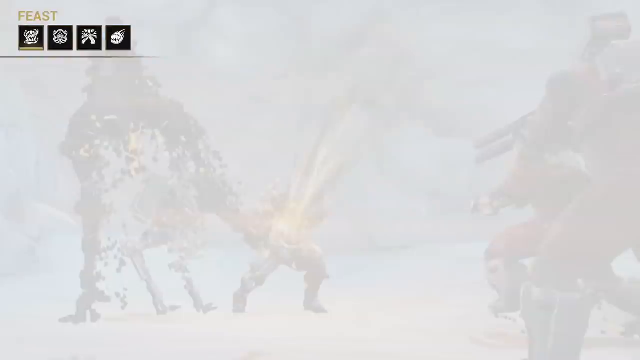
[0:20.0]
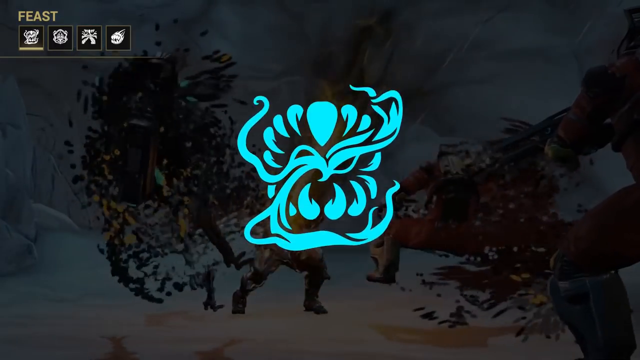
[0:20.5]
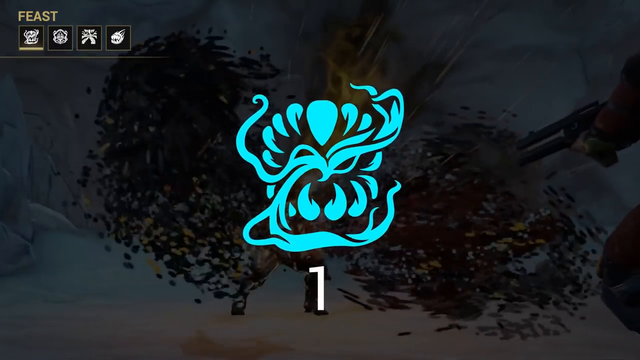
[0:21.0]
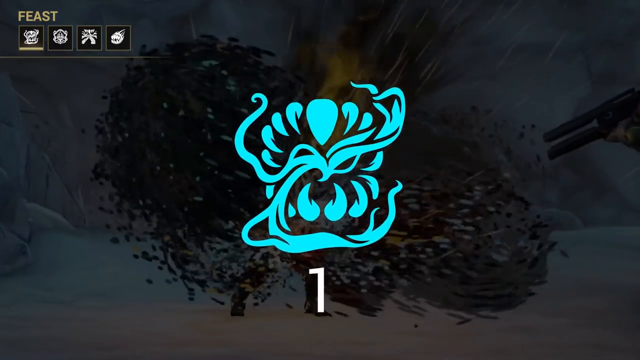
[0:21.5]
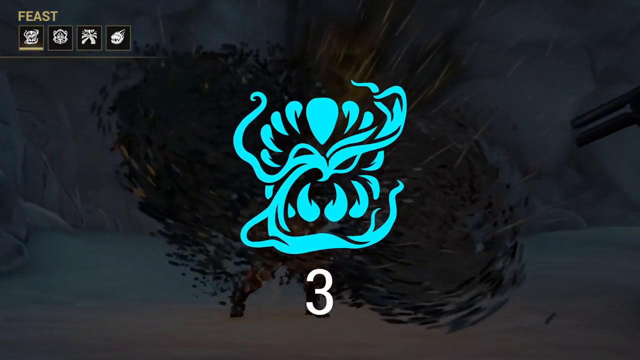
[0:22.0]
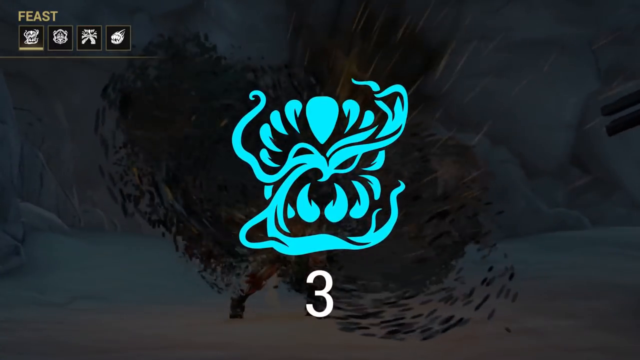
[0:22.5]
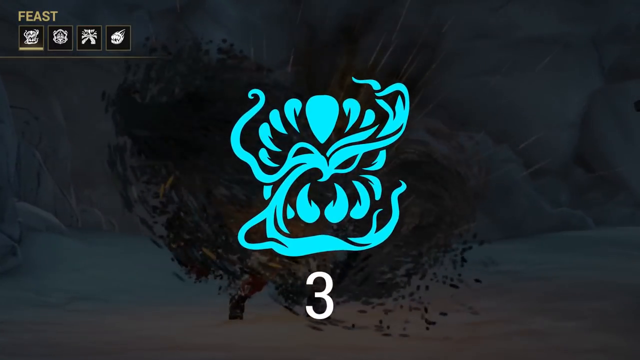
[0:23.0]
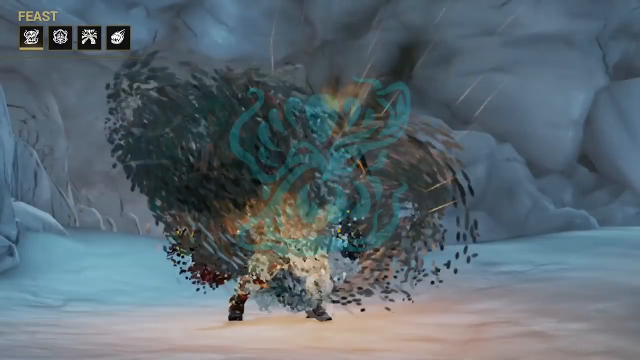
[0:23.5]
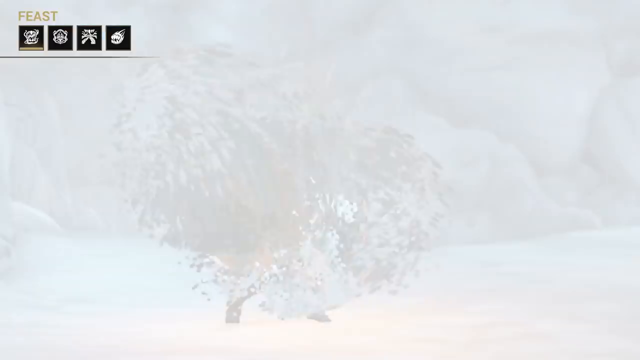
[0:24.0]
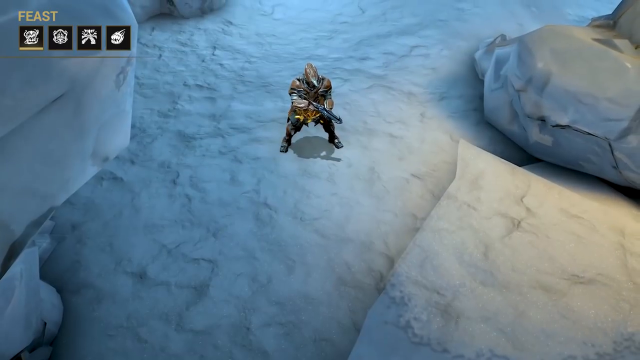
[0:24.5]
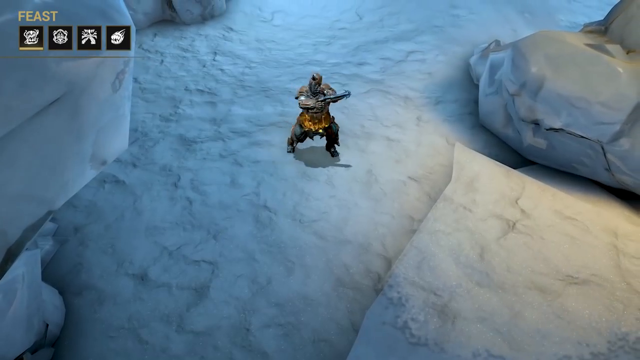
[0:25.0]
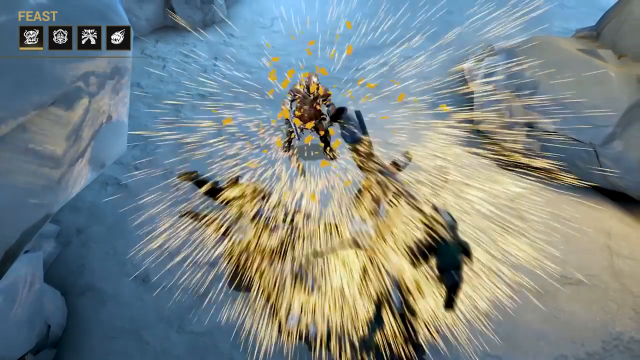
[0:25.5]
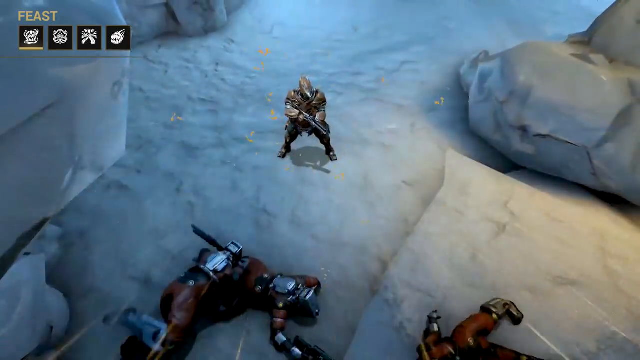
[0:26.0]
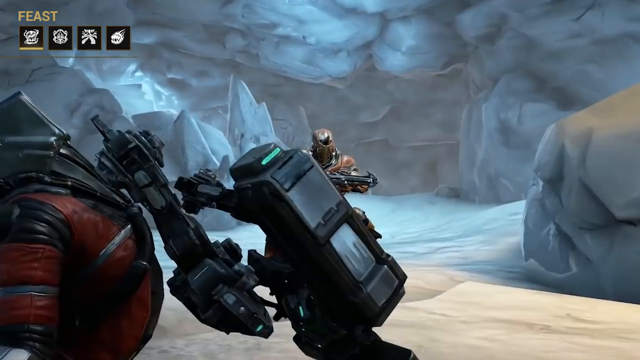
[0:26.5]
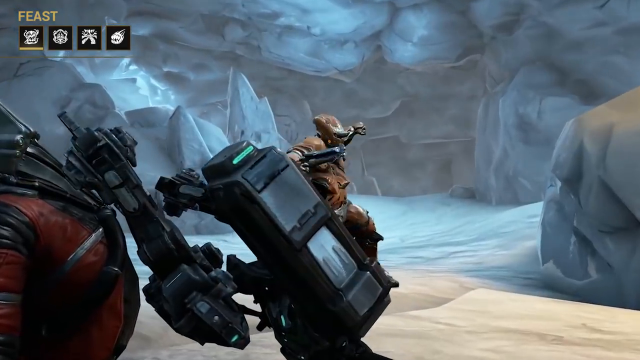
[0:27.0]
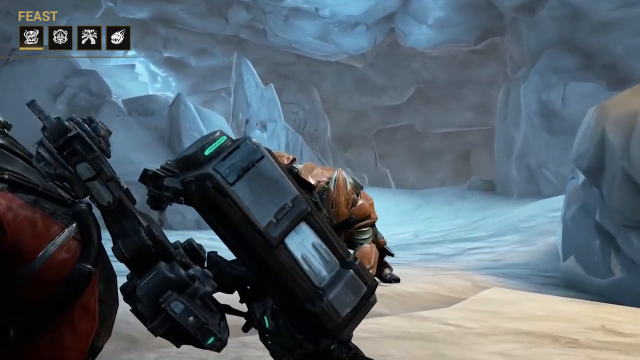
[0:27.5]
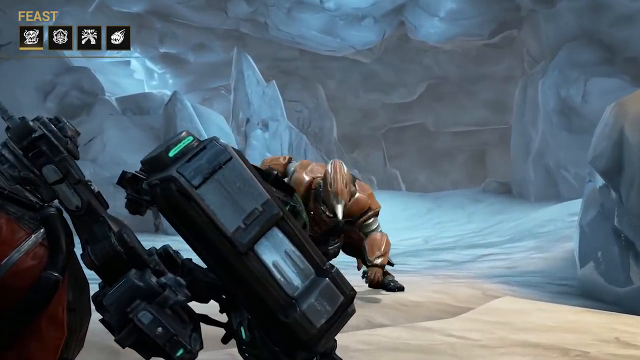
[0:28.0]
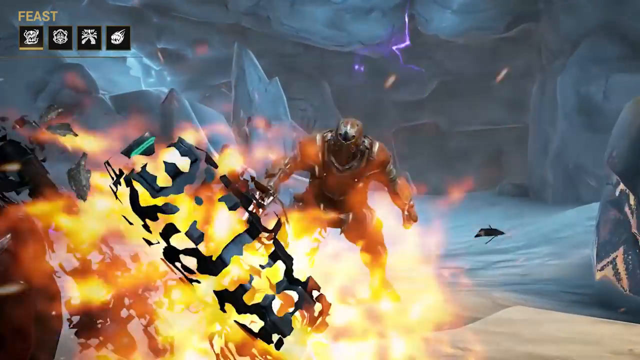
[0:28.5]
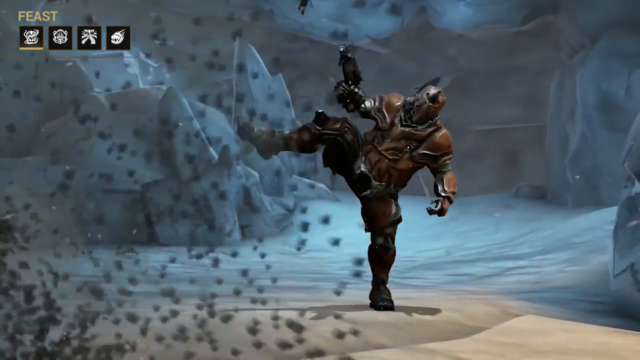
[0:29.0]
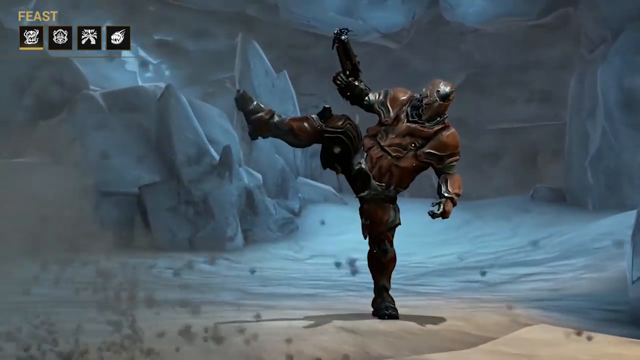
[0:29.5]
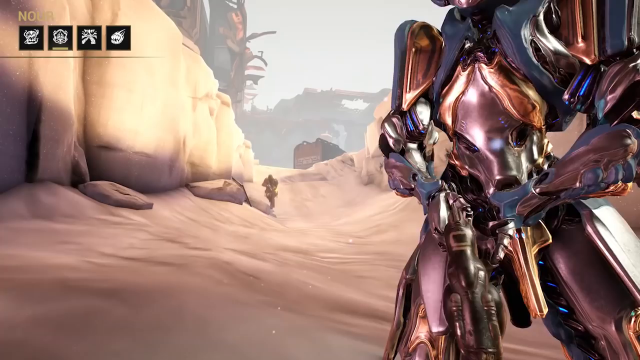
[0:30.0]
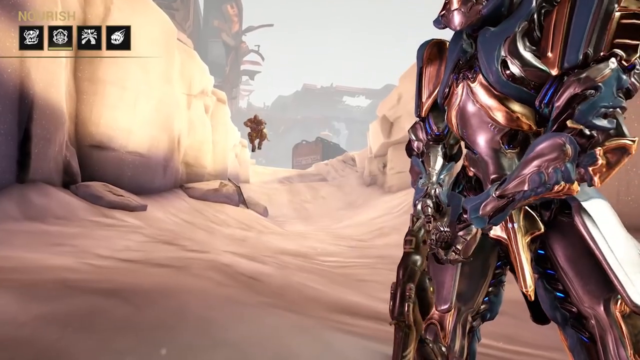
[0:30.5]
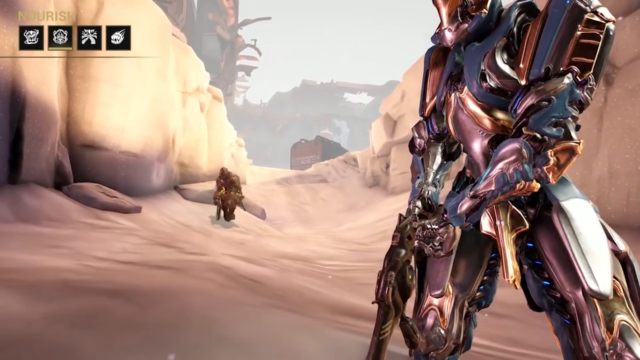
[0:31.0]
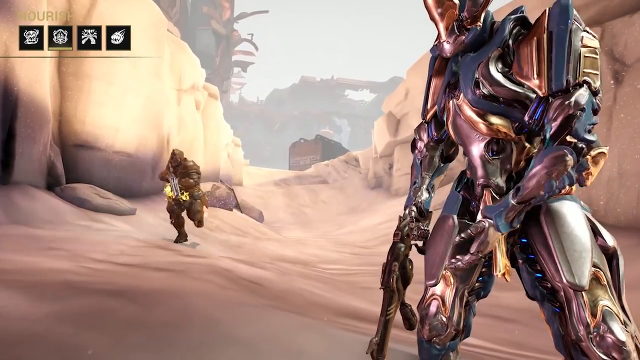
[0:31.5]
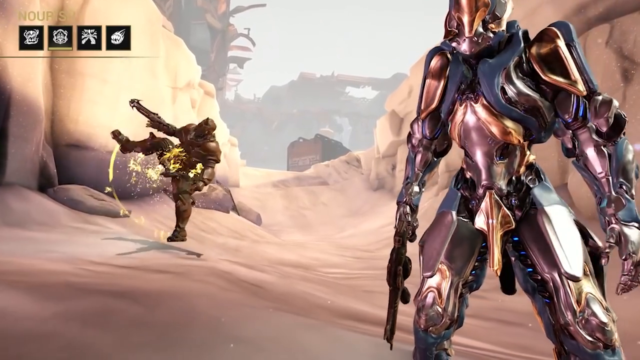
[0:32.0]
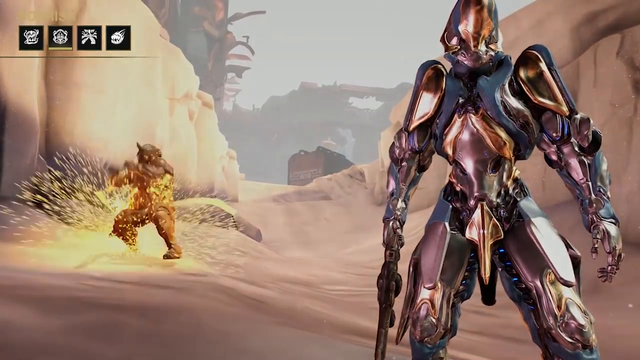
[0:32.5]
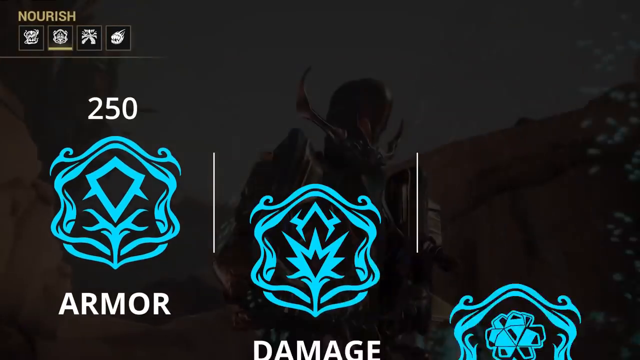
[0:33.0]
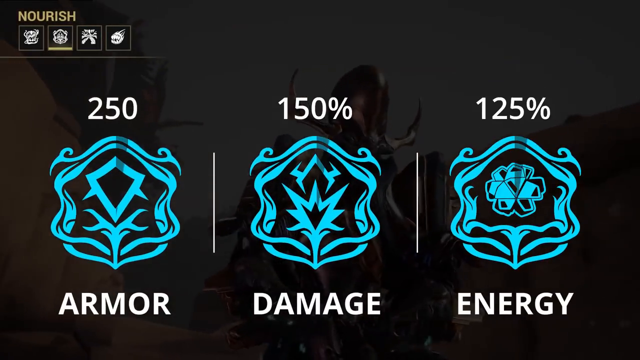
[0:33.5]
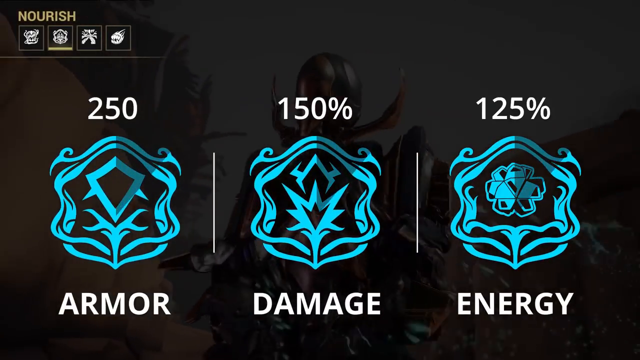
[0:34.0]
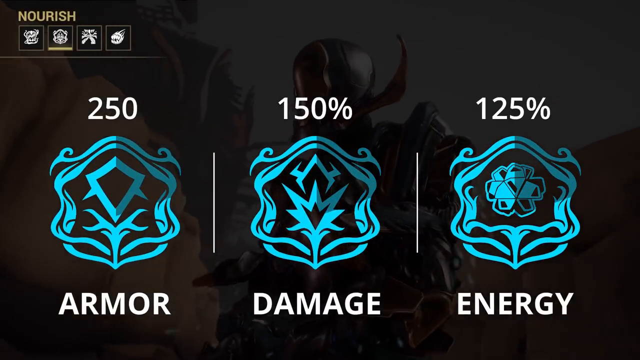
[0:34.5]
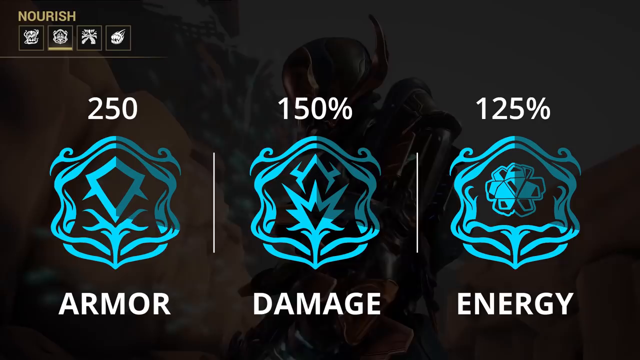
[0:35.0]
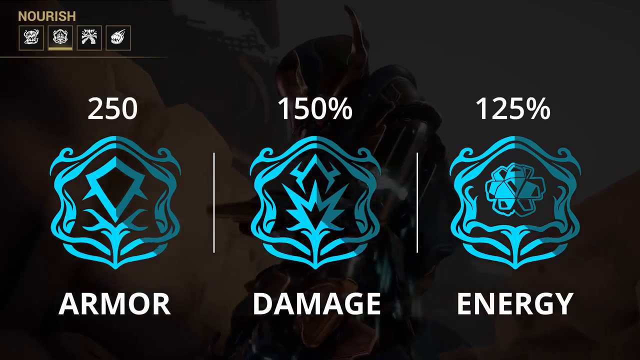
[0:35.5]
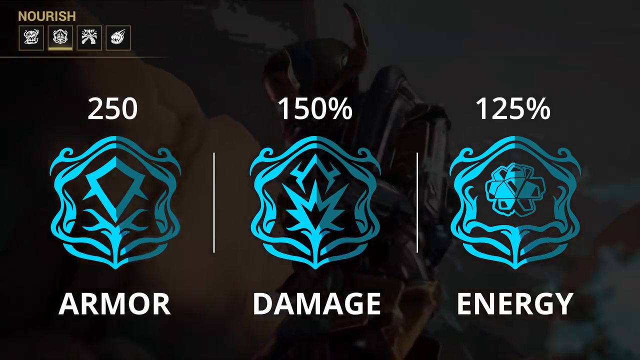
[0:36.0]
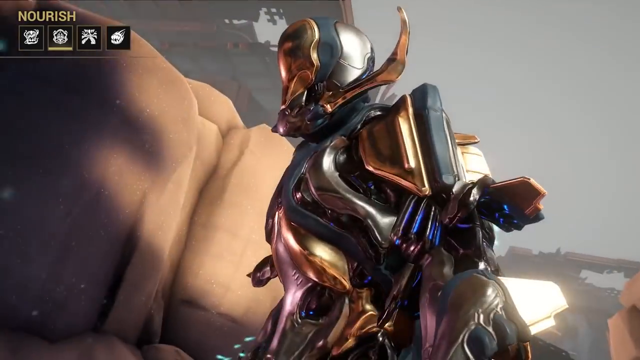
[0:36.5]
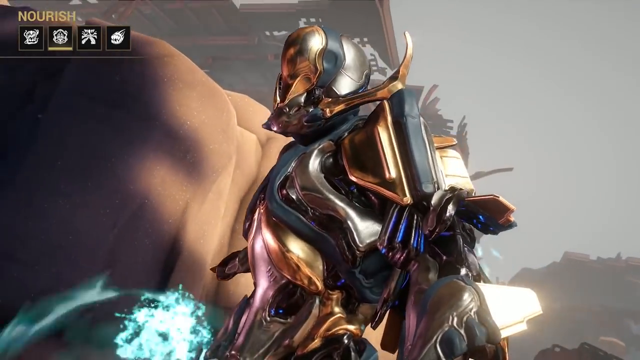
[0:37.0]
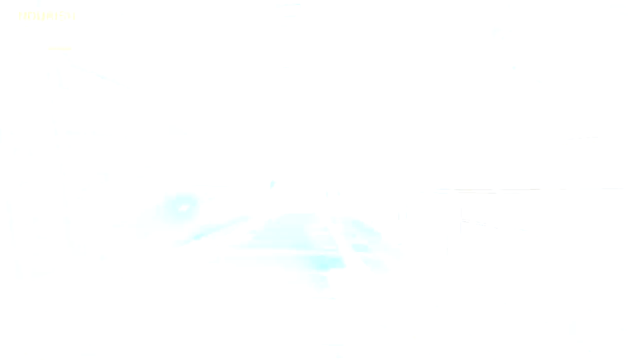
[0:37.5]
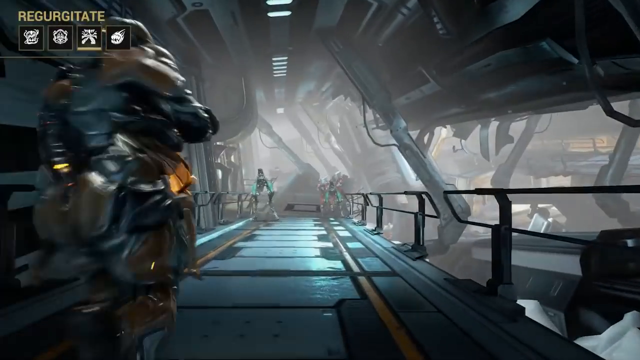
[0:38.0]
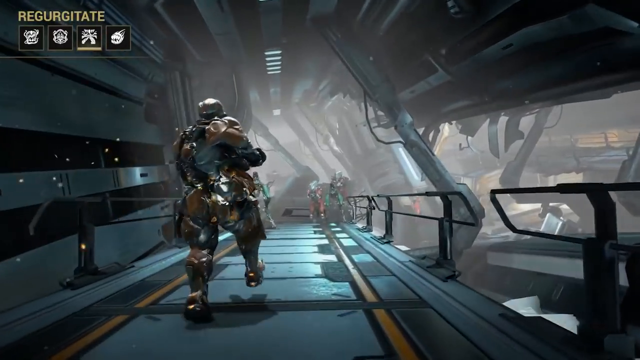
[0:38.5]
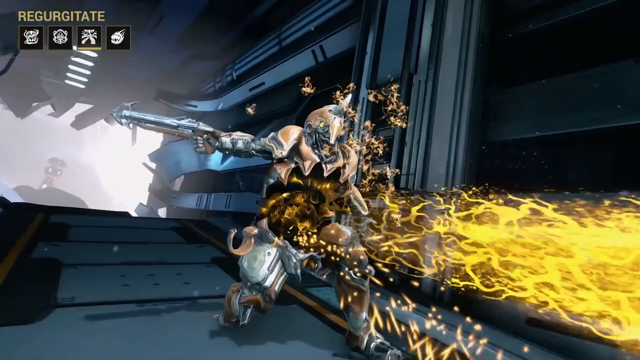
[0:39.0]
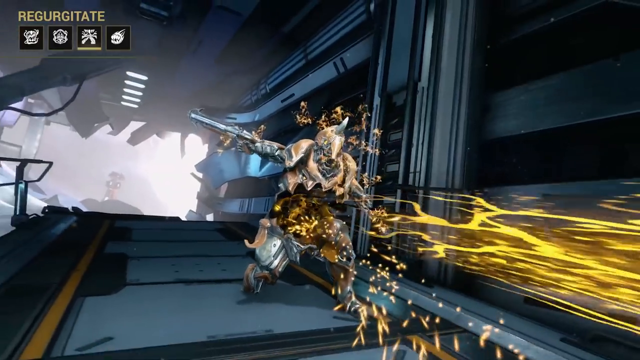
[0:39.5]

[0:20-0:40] The screen is very white, and a teal-blue shape kind of like an octopus pops up from the bottom; text reads "one two three." A guy has swirling things coming at him from the bottom up to the top. Then a different guy in armor is on white, rock-like ground with a gun, shooting. His outer core comes off, but he is still alive, and he pounds the ground; this is apparently Grendel. He kicks up his foot and pounds it down, very overdramatically. A score-like display comes up reading "250 armor," with a blue design between the words, then "150 damage" and "125 percent energy," each over a different kind of shield or icon. Black shading moves from the 12 o'clock position around to 7 o'clock, apparently signifying time. The guy then moves around a path again, shooting.